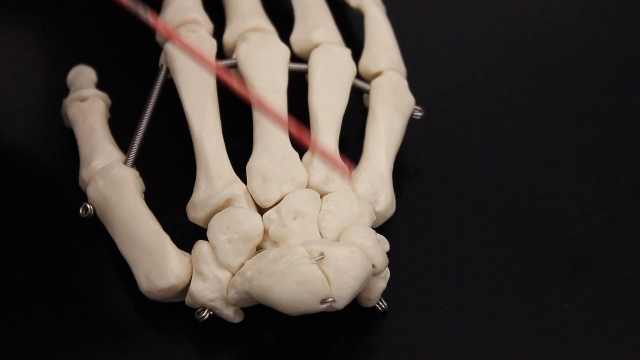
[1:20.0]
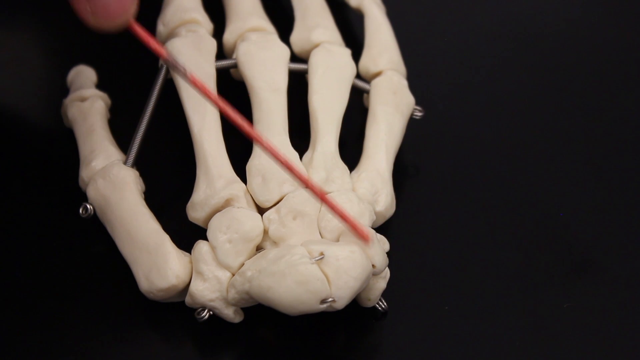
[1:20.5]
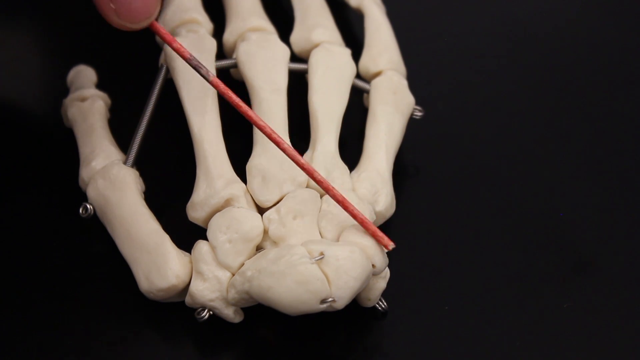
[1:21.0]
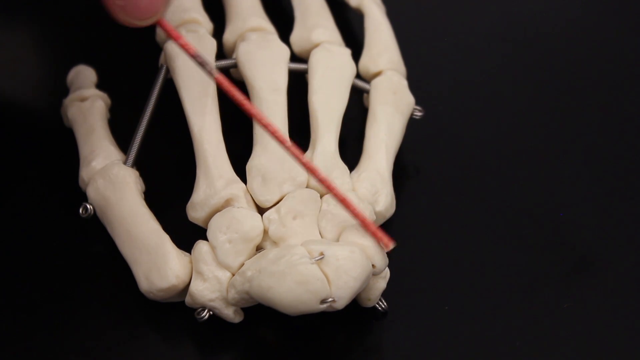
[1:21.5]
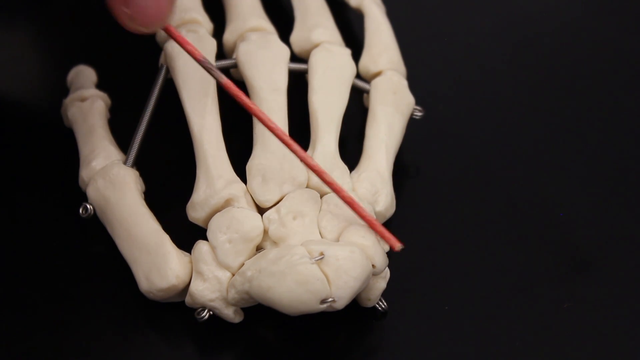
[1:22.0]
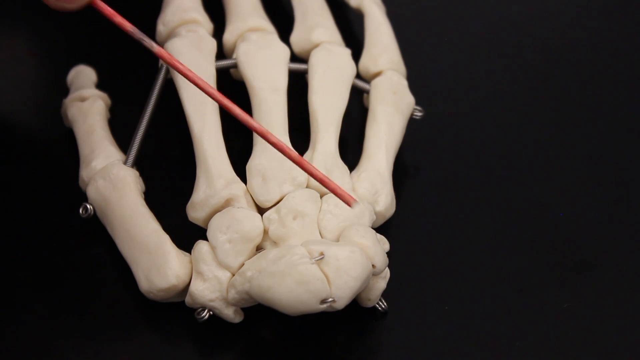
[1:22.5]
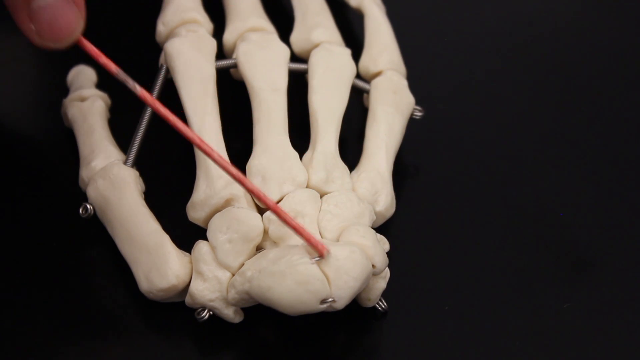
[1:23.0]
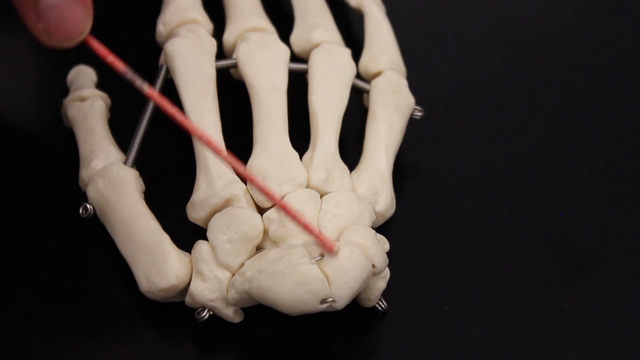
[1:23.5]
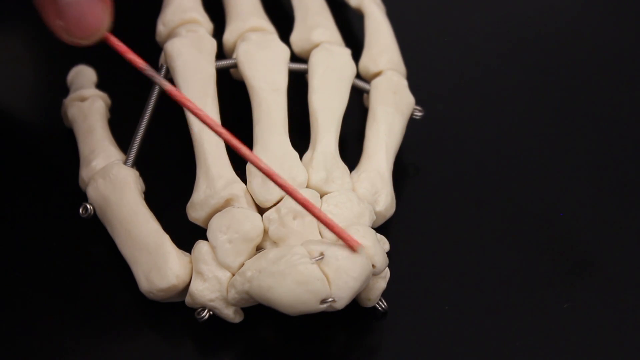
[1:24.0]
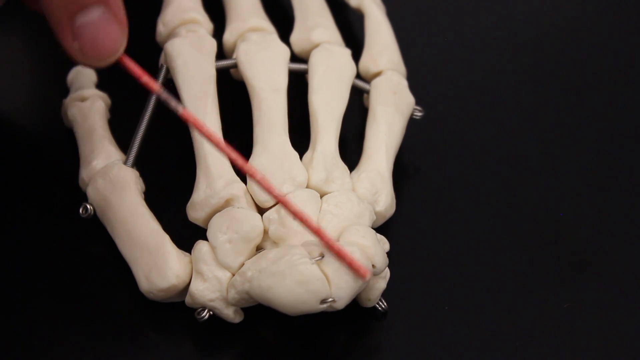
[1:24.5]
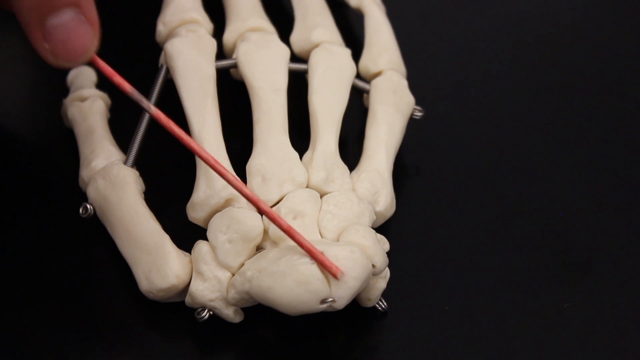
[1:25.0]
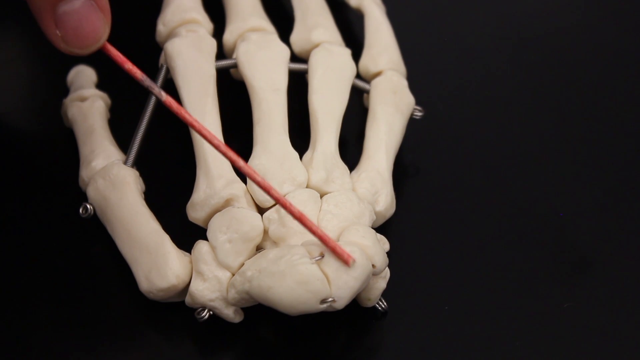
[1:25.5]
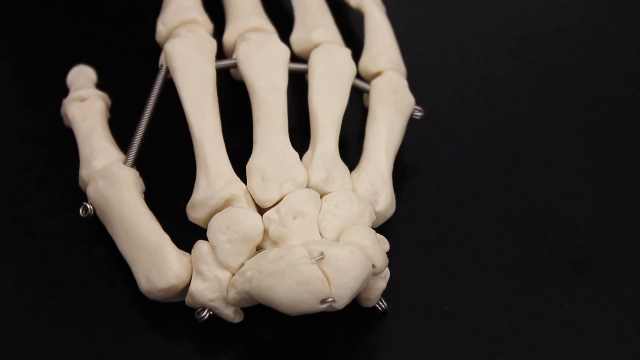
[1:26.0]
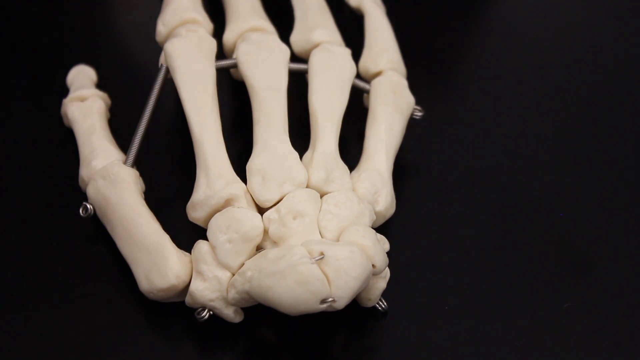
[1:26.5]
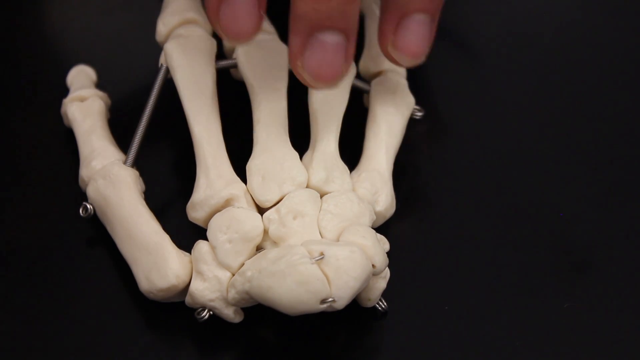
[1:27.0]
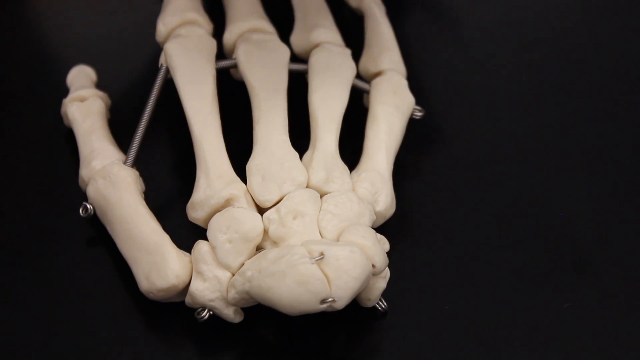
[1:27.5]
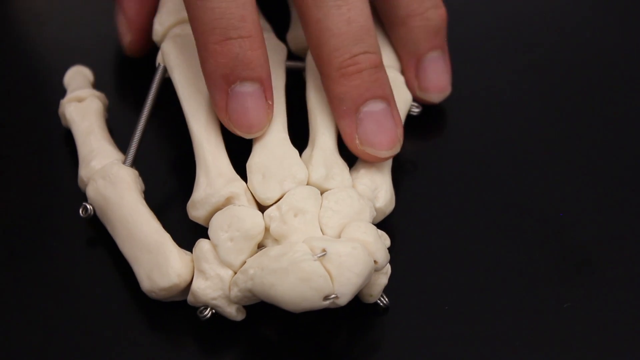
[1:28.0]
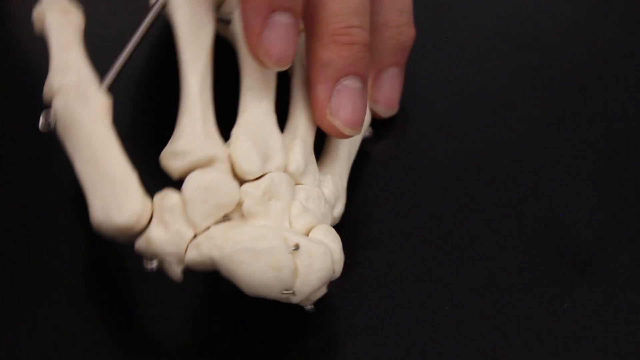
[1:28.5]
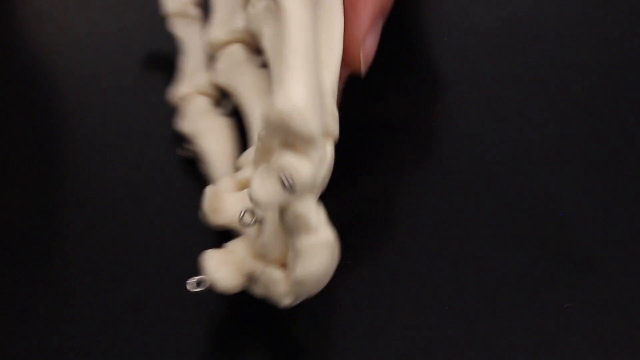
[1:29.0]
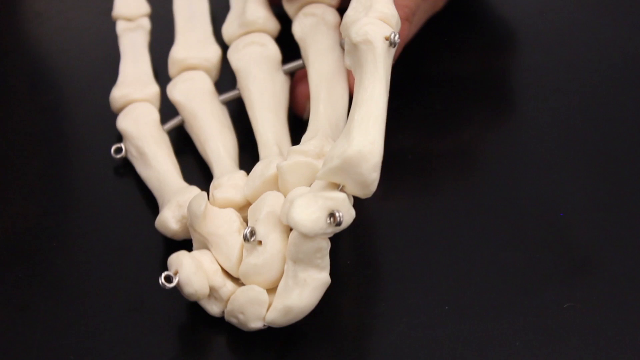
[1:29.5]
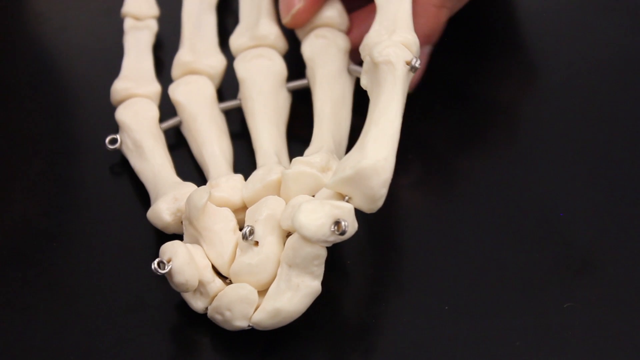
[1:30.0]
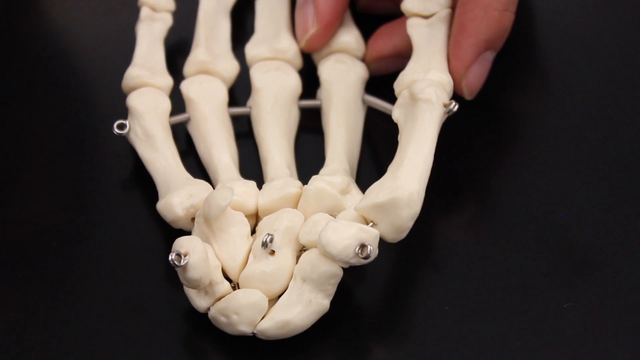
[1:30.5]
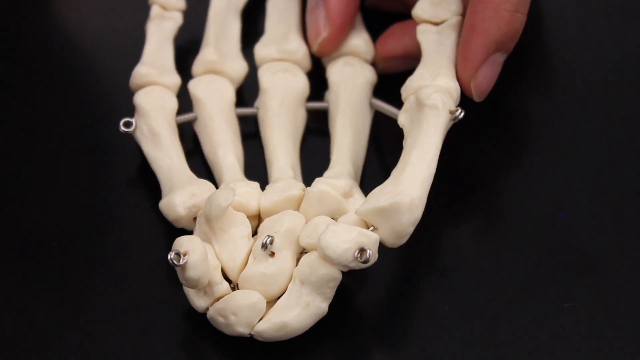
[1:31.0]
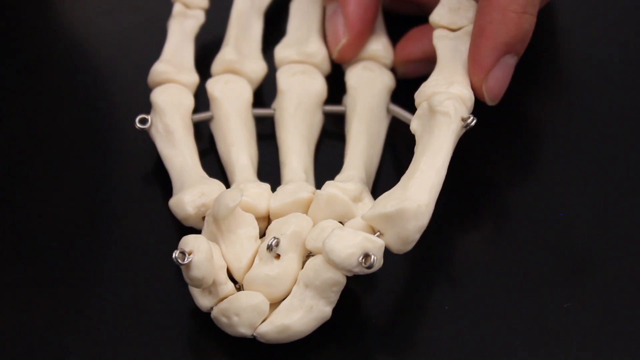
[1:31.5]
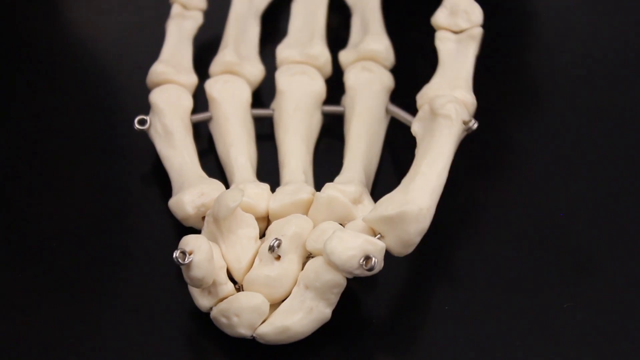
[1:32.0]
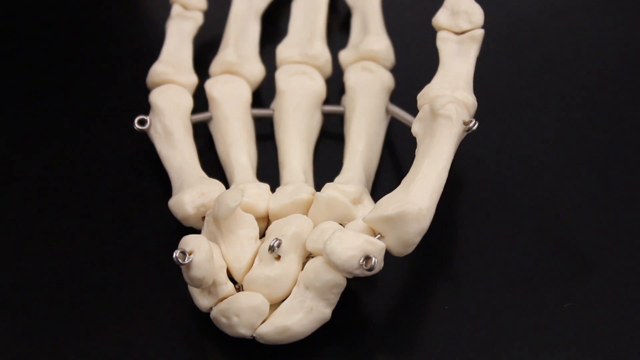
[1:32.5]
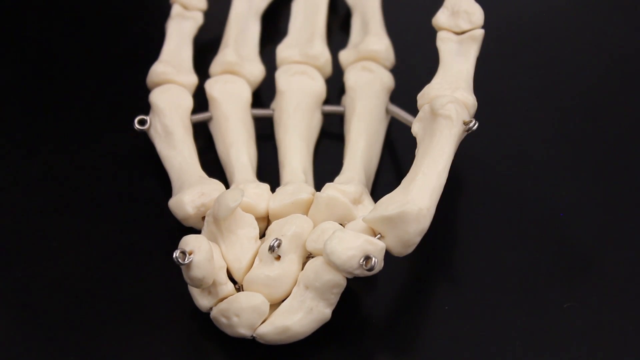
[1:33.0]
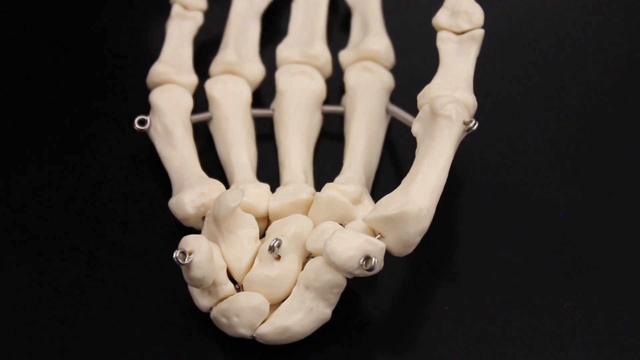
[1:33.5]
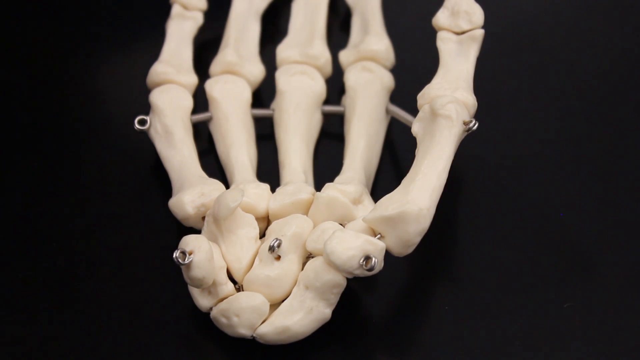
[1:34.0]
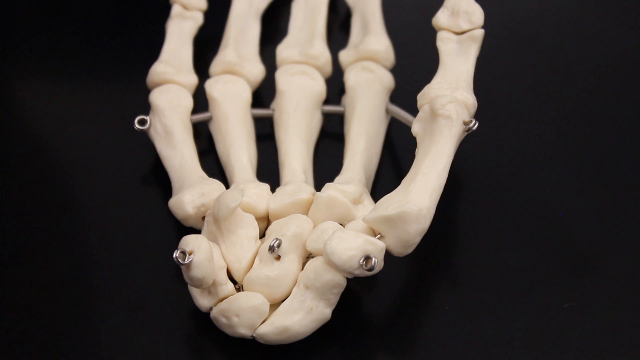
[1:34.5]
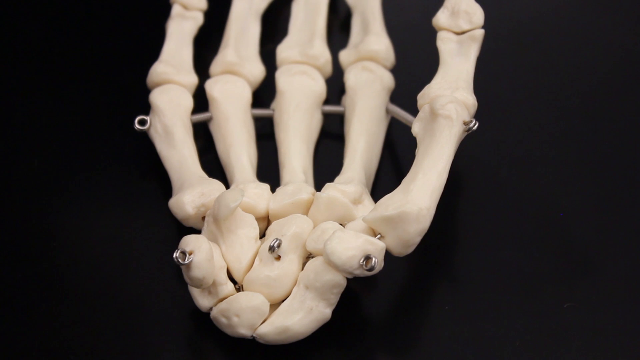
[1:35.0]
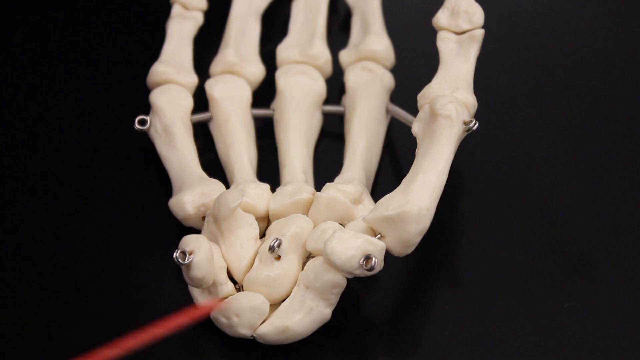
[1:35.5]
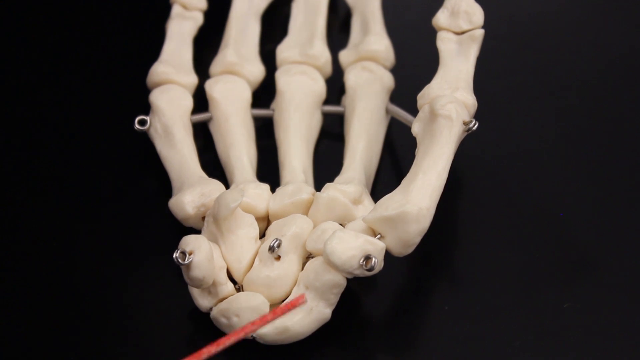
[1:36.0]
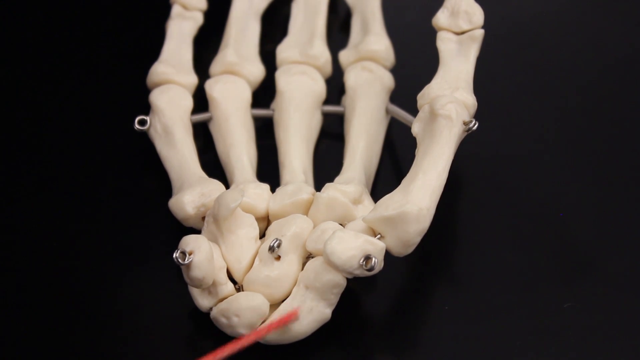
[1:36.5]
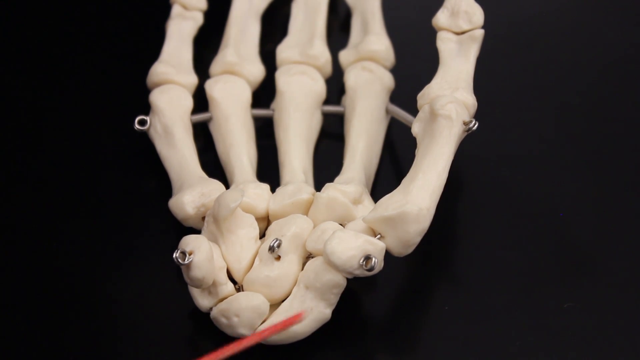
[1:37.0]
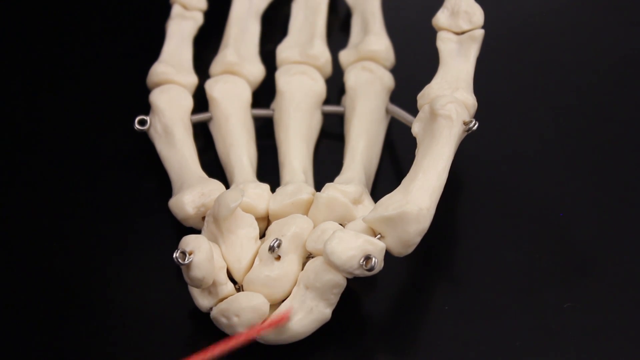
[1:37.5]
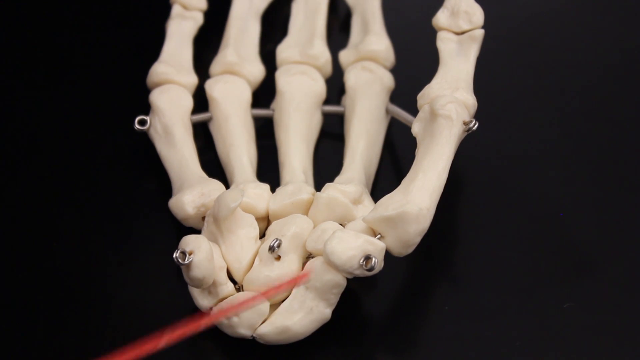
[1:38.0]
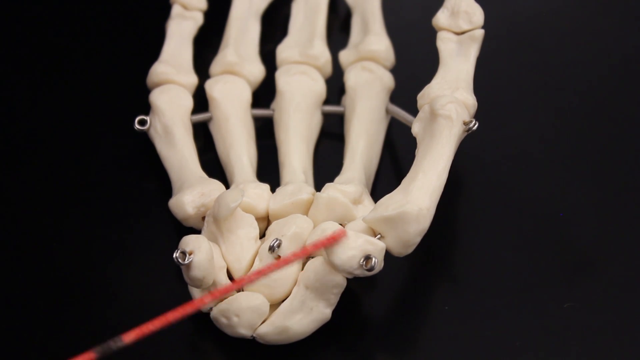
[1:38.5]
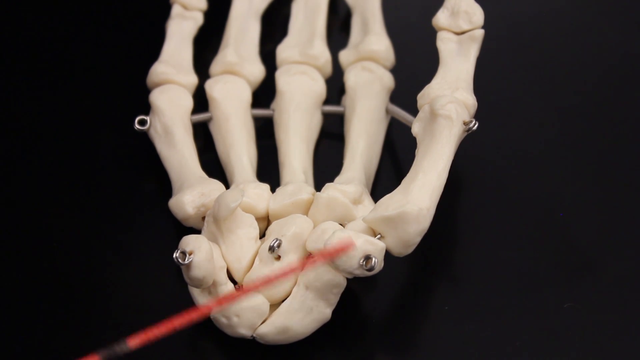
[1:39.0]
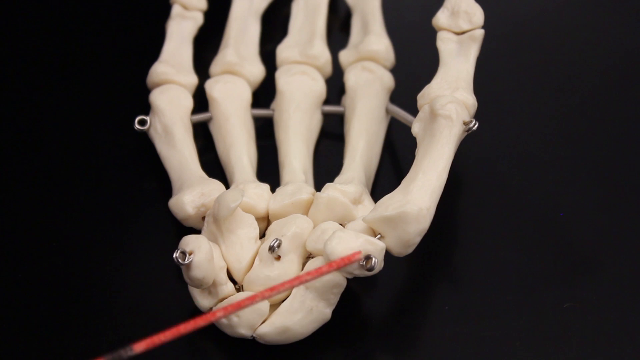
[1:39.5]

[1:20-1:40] A model of a human skeletal hand, a right hand, has its bones held together with metal rods that puncture the bones. It is on a black surface, placed with the wrist facing forward toward the camera. Someone points at the right part of the wrist with a pink painted wooden stick; the tip of the finger gripping the stick is visible in the top left corner as they rub the right wrist bone. They then move the stick slightly to the left, rubbing the center bones of the hand. With their other hand, the one not holding the stick, they motion toward various bones of the hand and then flip the hand over completely so the palm faces up. The stick re-emerges from the bottom left corner and starts touching the various bones that make up the palm and wrist.